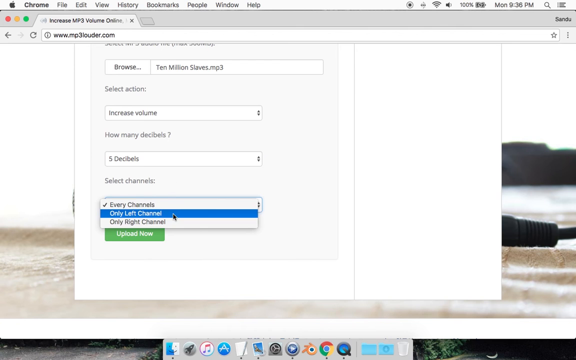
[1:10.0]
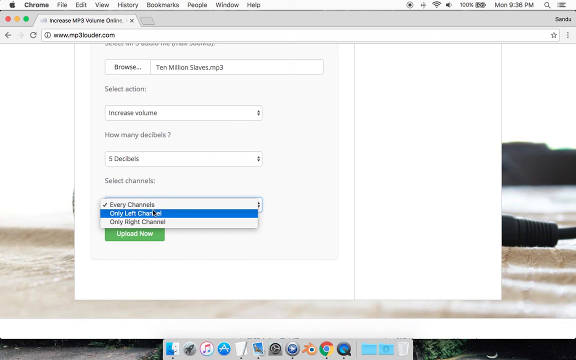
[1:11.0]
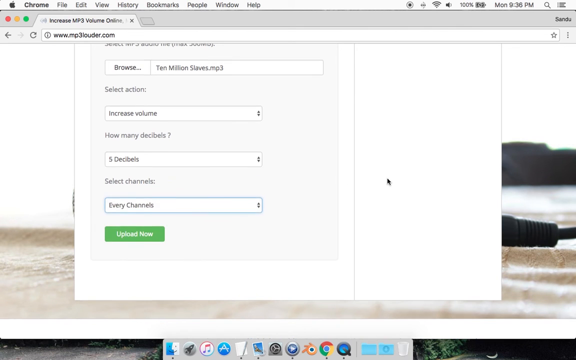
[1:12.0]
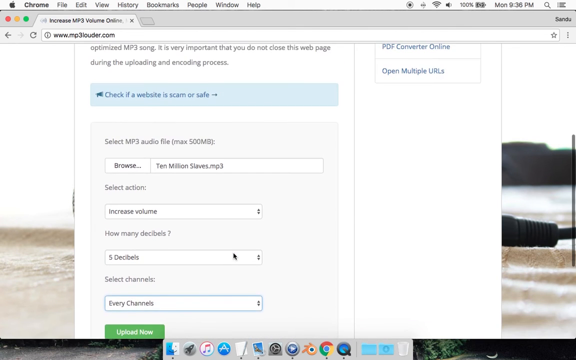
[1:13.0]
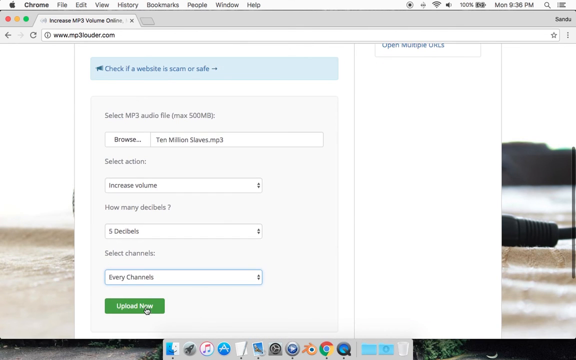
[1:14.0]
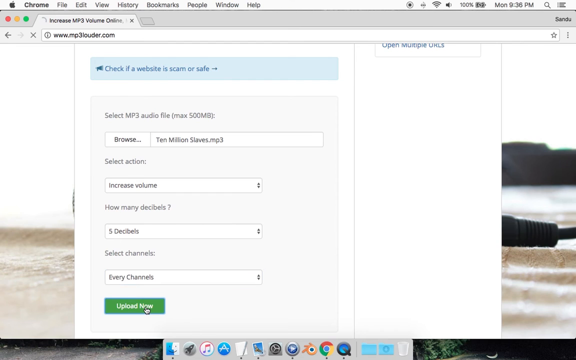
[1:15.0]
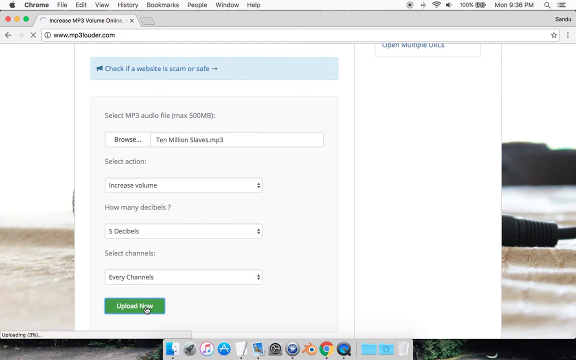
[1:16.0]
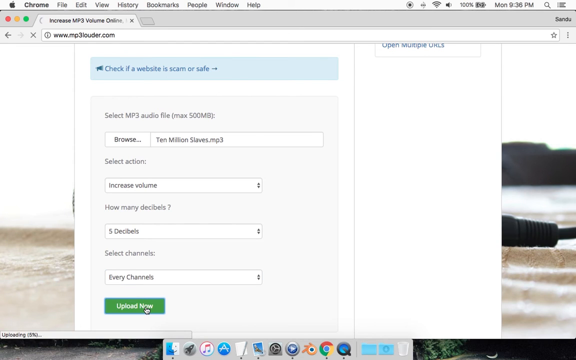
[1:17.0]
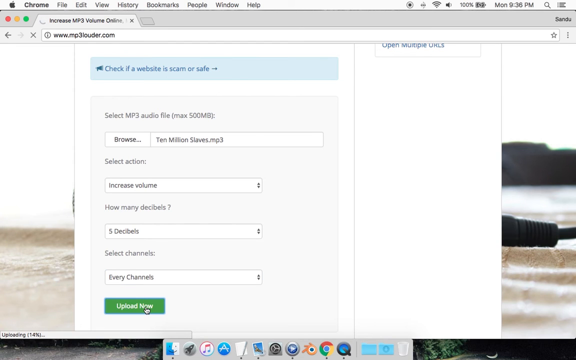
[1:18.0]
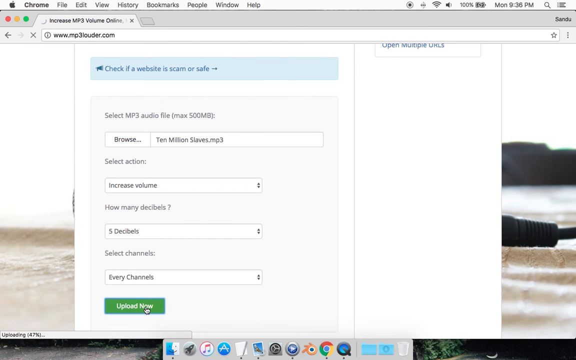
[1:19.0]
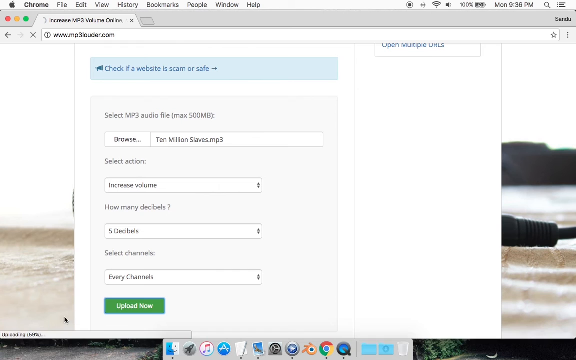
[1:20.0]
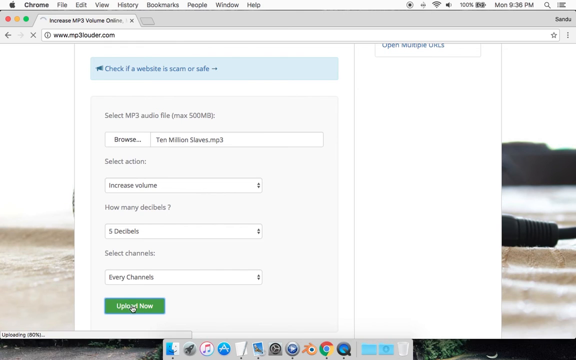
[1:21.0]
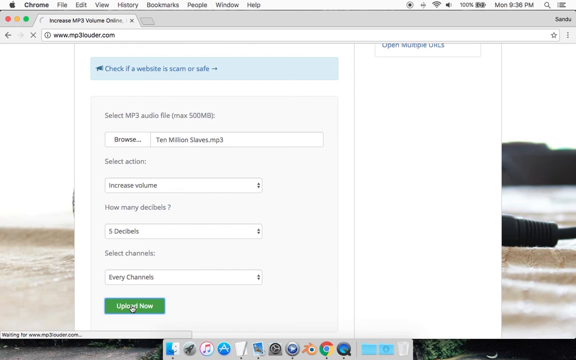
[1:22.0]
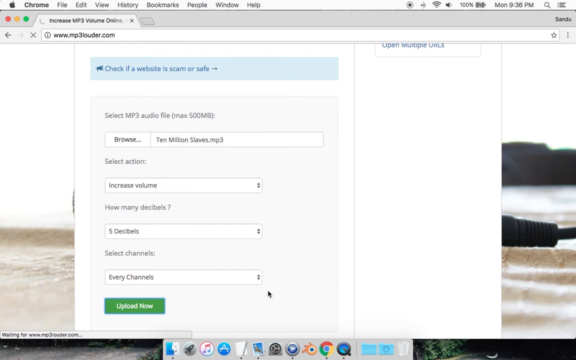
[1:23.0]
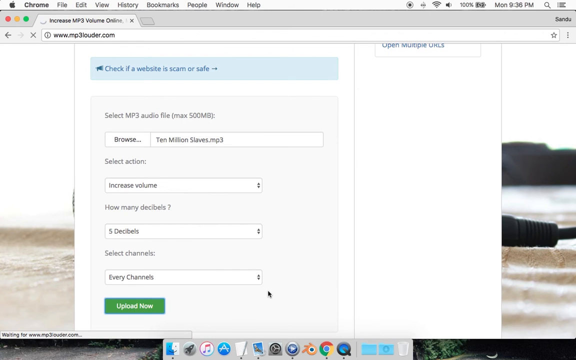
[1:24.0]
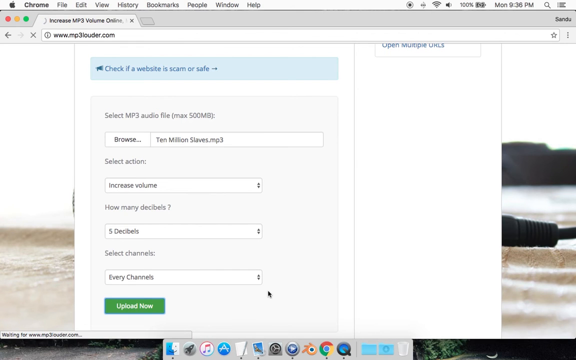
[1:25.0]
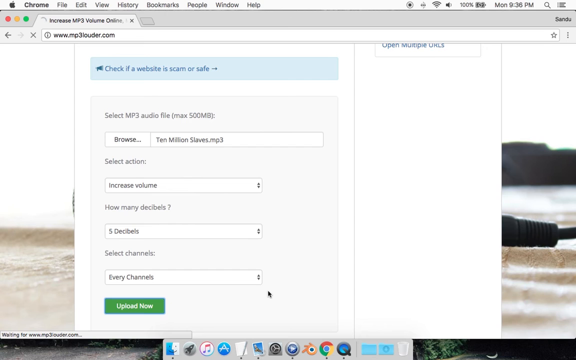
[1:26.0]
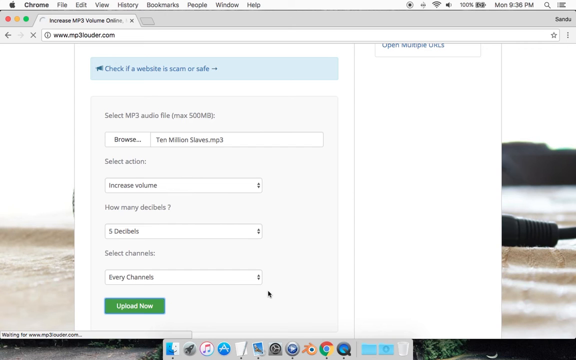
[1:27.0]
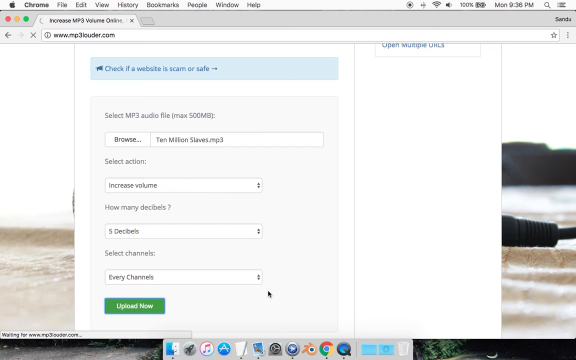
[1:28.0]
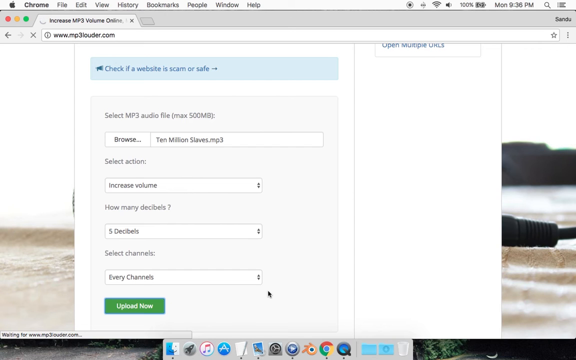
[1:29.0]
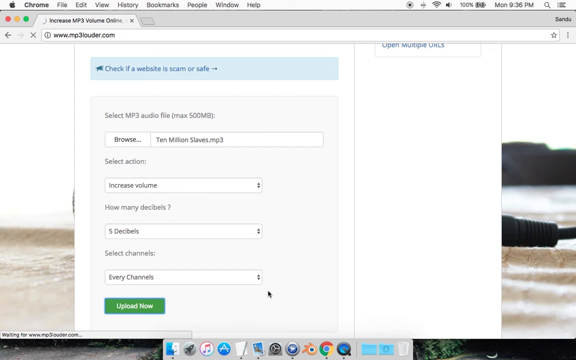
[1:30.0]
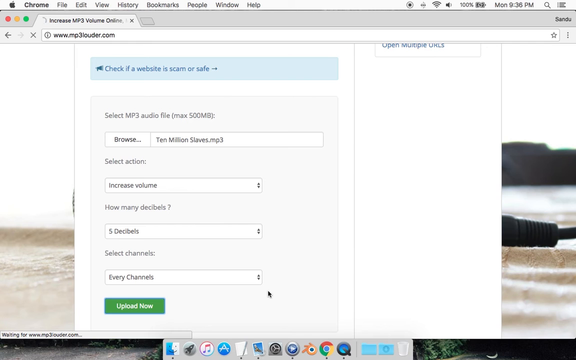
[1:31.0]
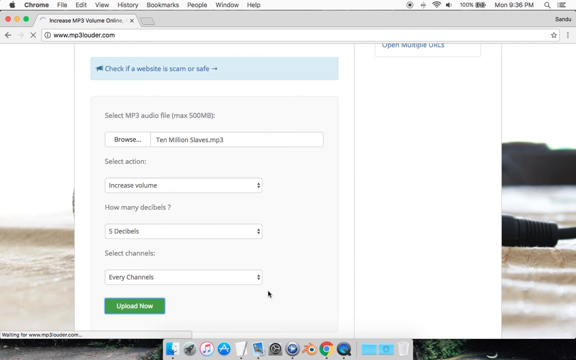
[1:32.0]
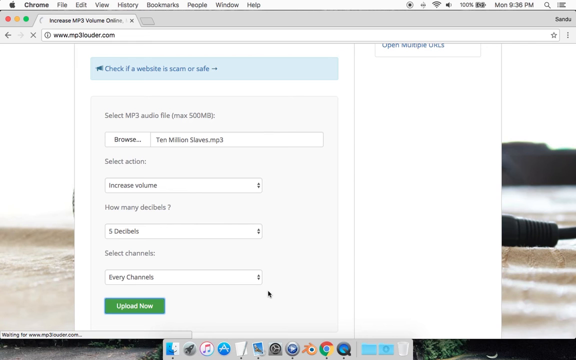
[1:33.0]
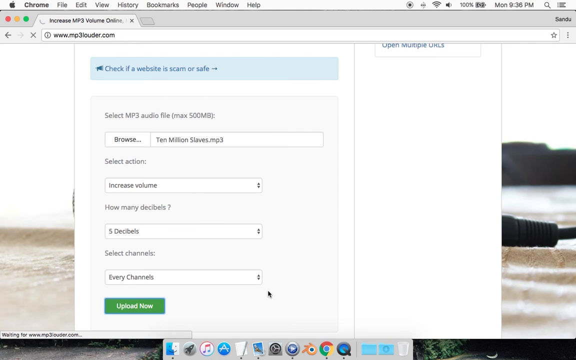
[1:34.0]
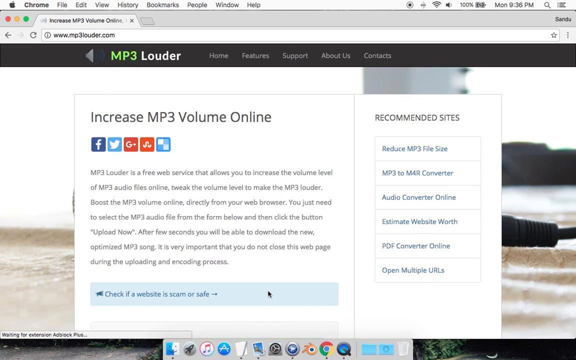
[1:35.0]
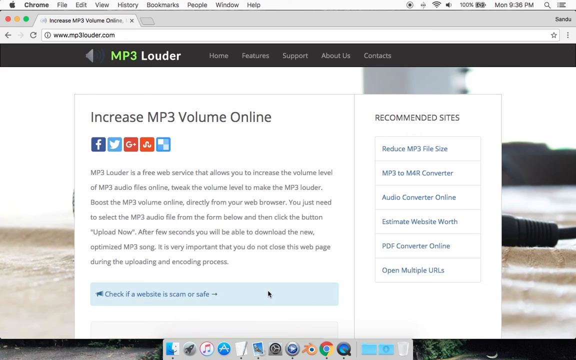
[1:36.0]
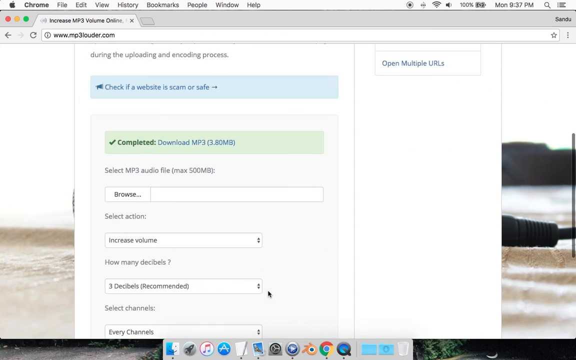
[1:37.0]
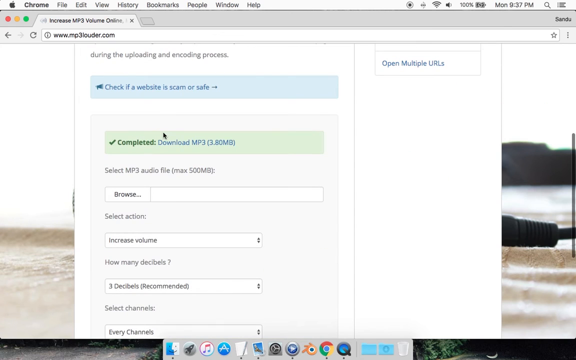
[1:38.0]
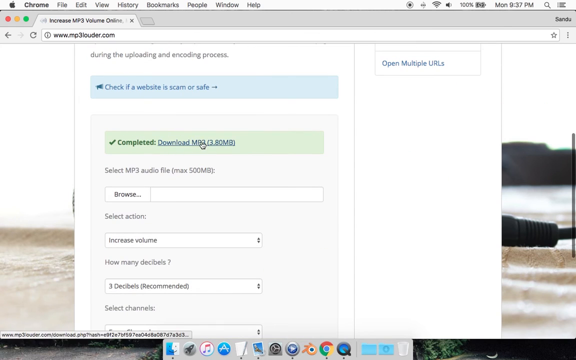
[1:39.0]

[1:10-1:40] On the mp3louder.com website, the user is scrolled toward the bottom of the page, where there are a few drop-down menus. The drop-down menu under the select channel section is open, showing the options "every channels", "only left channel" and "only right channel", and the user selects "every channels". They scroll up the page a little and click the upload now button. At the bottom of the browser it says "uploading" followed by a percentage that increases as the file uploads. The user waits a few seconds for it to finish, then the page refreshes and the user scrolls down. In the upload section, a message says "completed" and gives a link to download the mp3. The user's mouse hovers over the download link.